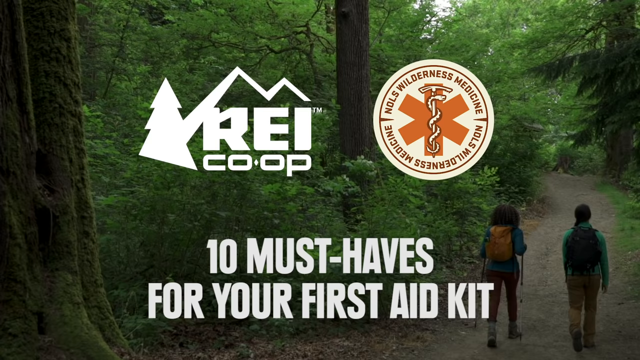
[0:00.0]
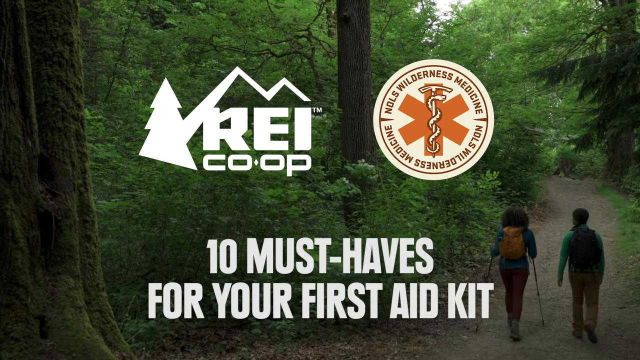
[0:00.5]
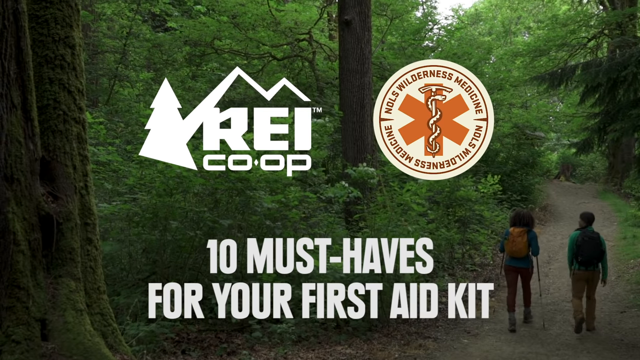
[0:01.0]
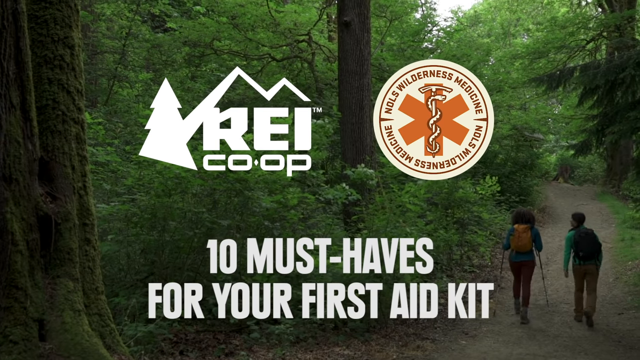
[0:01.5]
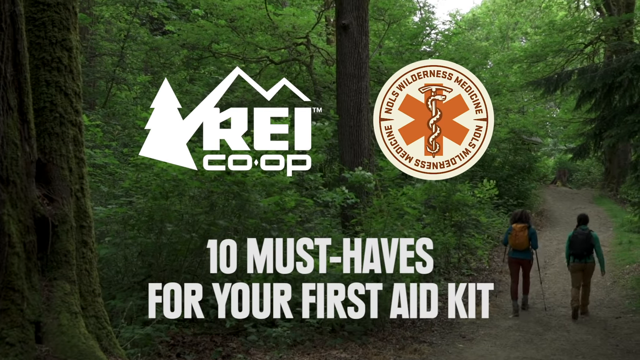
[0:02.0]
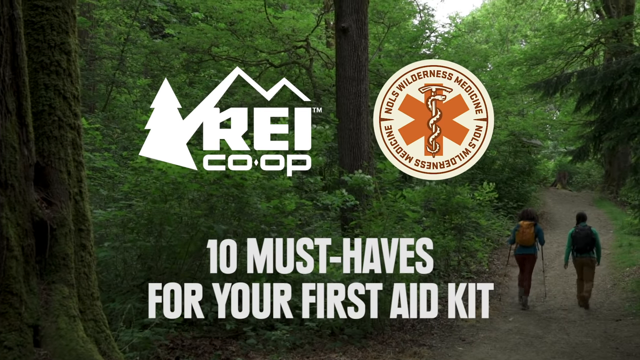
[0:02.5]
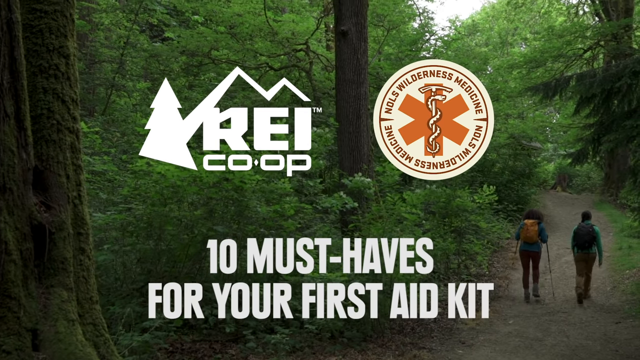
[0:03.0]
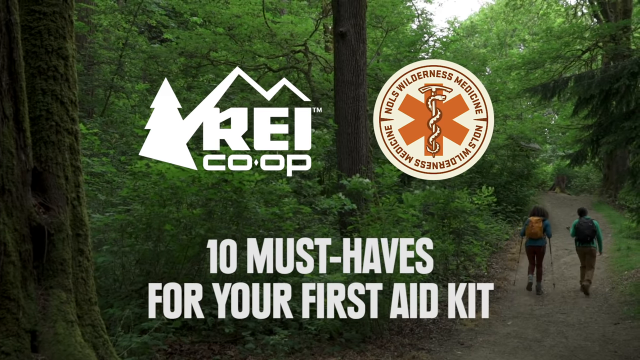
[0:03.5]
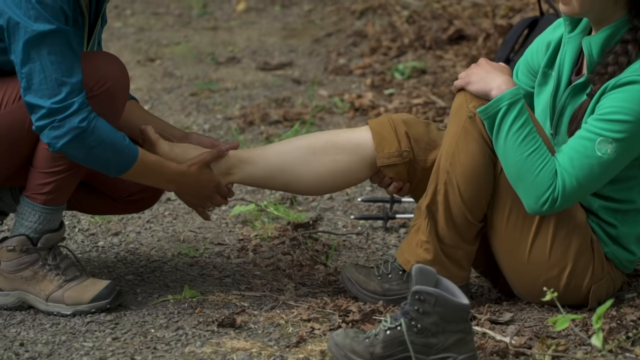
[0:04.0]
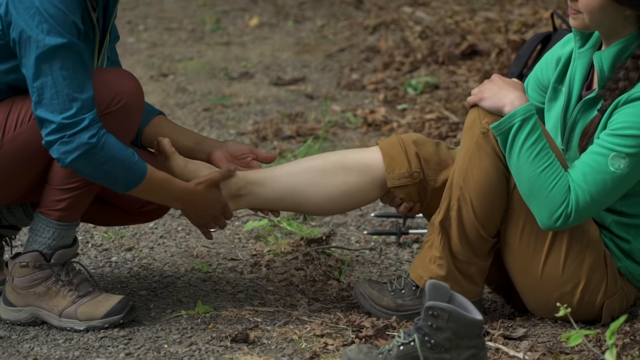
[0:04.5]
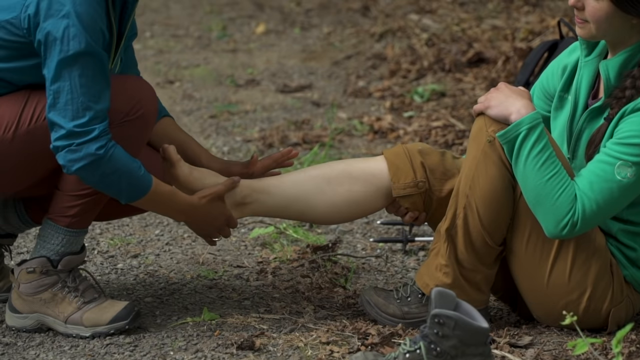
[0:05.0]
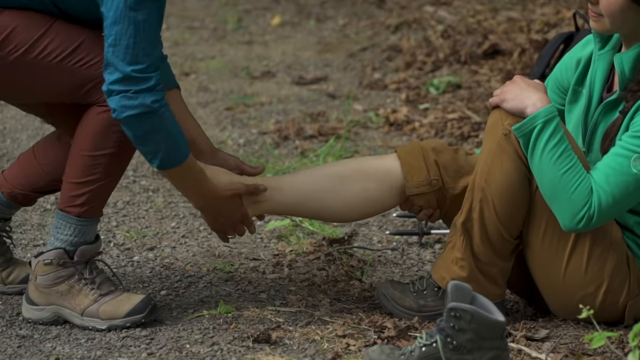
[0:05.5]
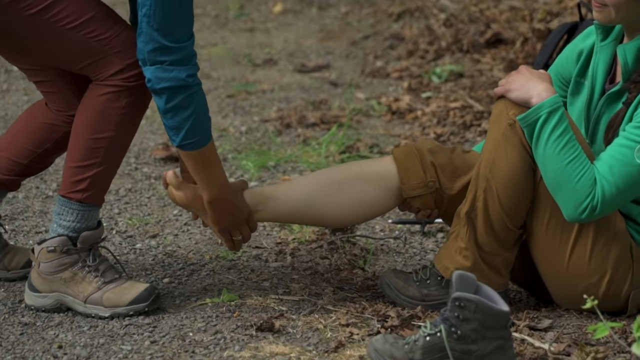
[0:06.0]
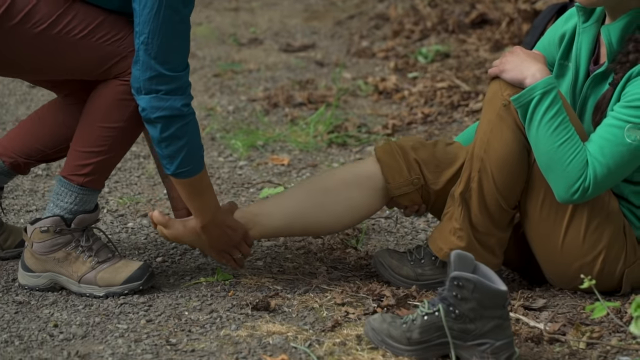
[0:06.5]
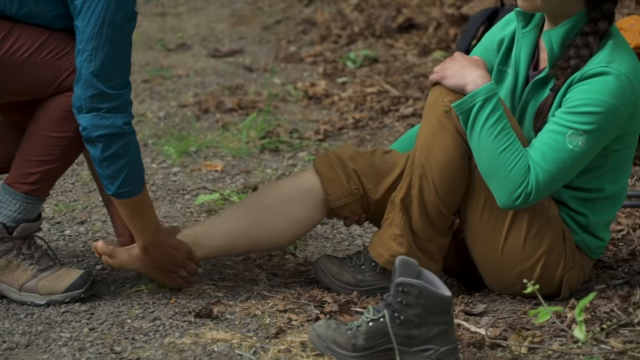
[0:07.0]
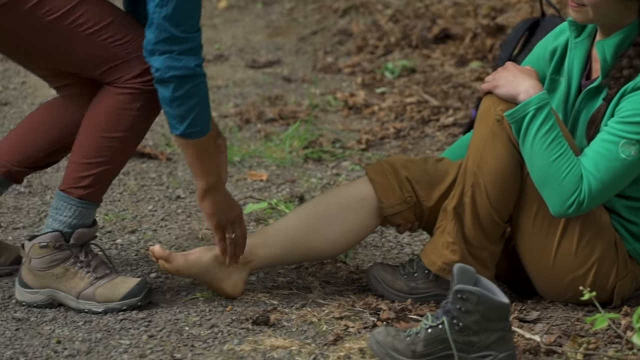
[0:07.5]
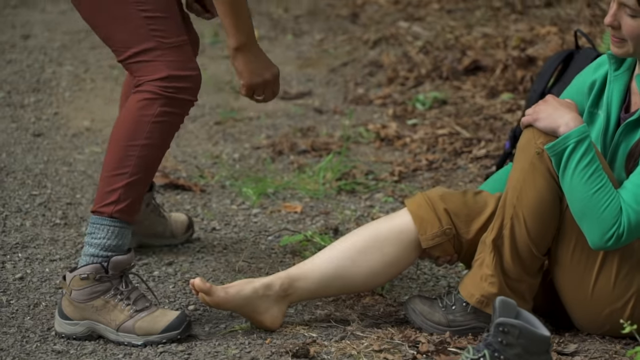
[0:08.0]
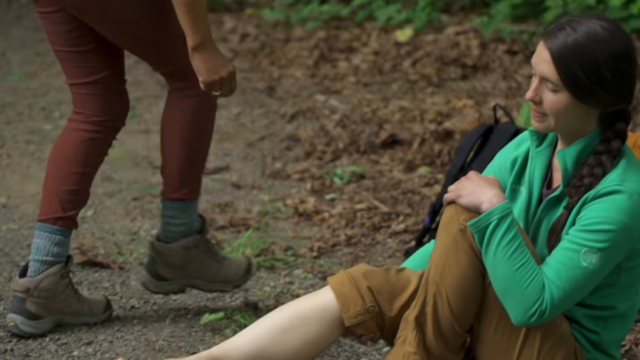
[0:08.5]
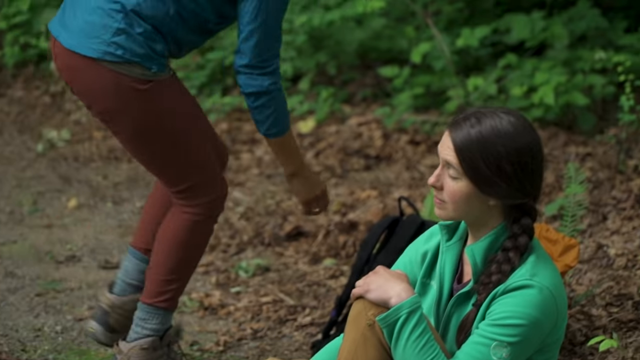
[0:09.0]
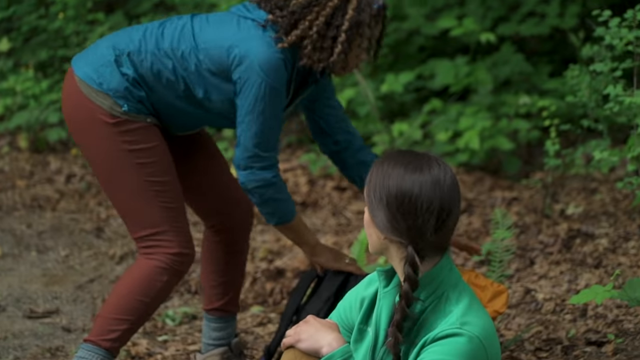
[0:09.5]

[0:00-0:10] Two girls hike along a trail in the middle of a forest, with lots of tall trees and green leaves scattered throughout. In the middle of the screen, a white illustrated logo for REI Co-op appears, followed by a red and white circular logo with the words "NOLS Wilderness Medicine" written twice along the inside of the circle; in the middle of the circle is a red asterisk with an illustration of a snake wrapped around a stick. At the bottom of the screen, white all-capital letters read "10 must-haves for your first aid kit".